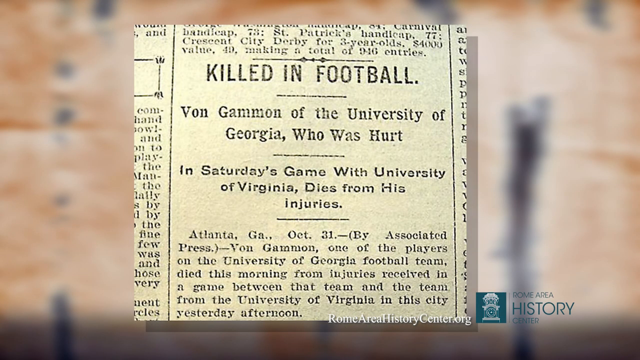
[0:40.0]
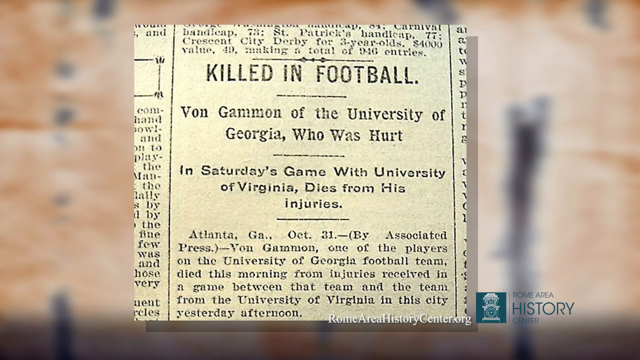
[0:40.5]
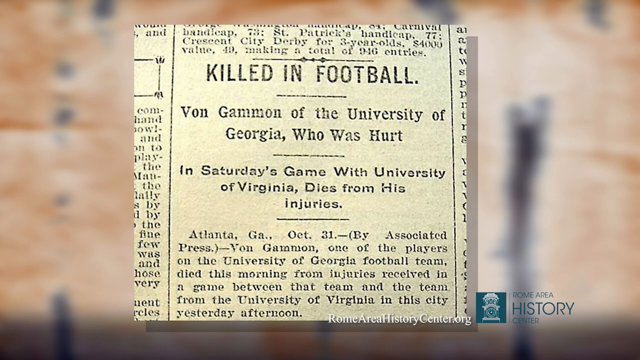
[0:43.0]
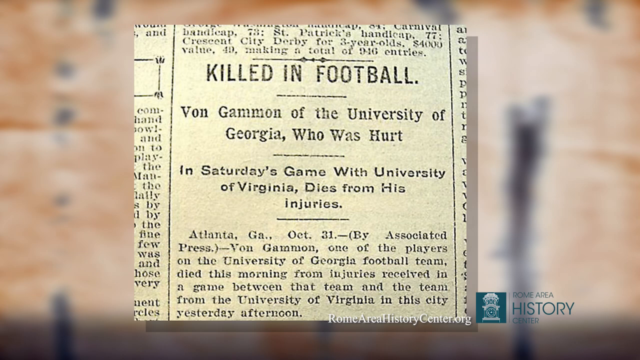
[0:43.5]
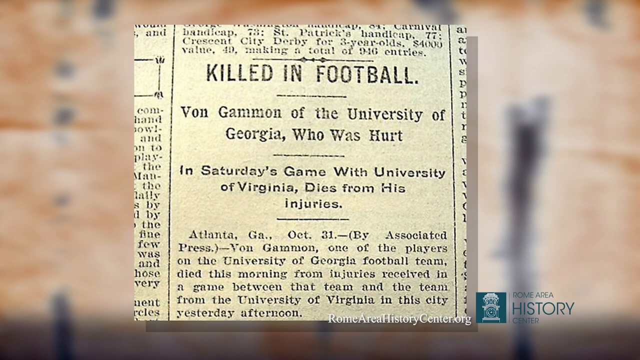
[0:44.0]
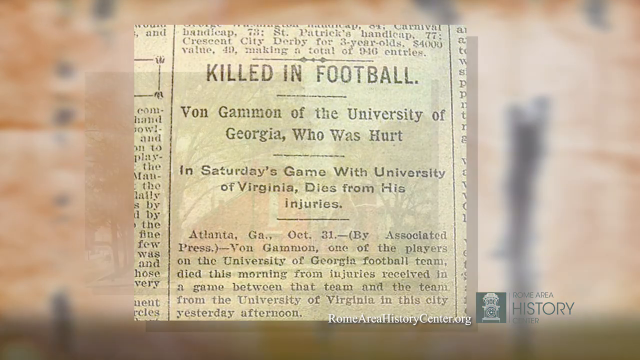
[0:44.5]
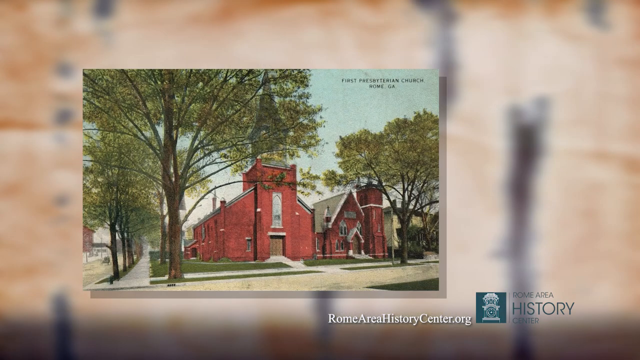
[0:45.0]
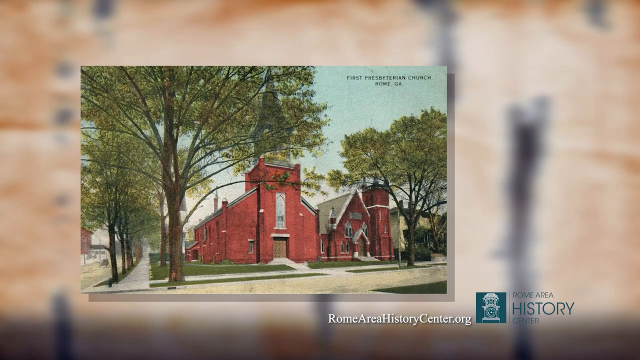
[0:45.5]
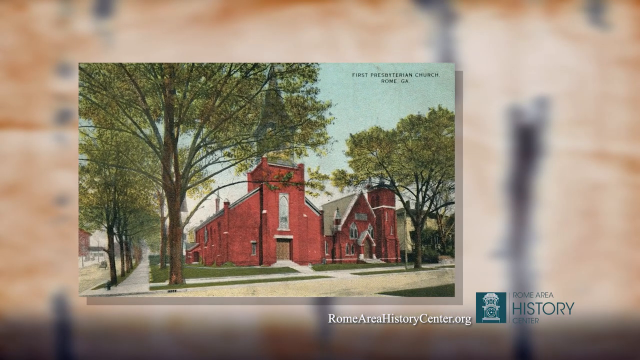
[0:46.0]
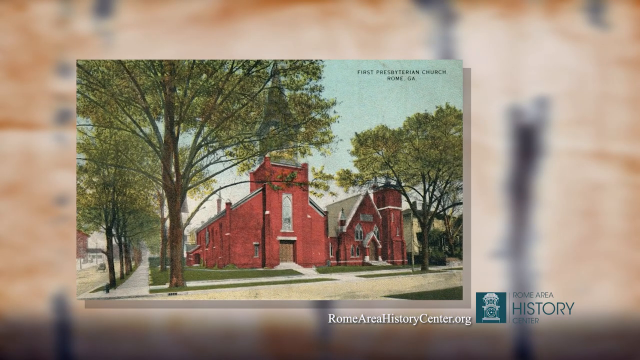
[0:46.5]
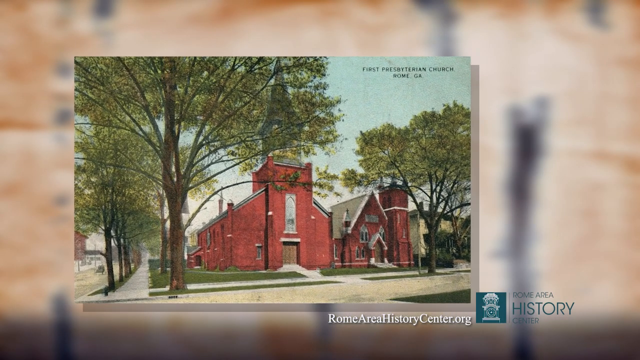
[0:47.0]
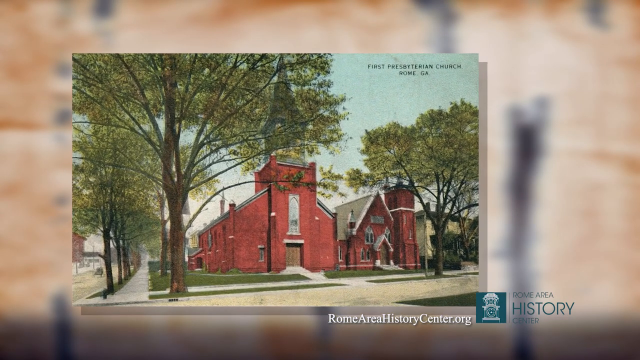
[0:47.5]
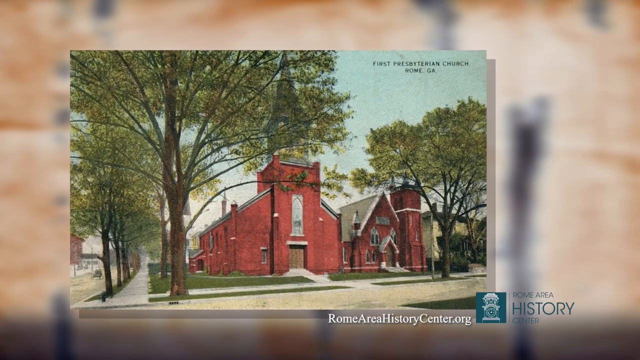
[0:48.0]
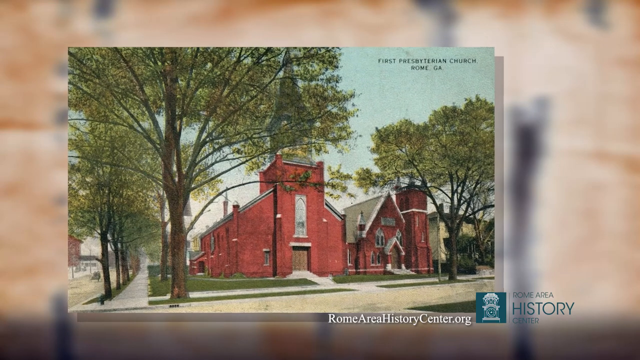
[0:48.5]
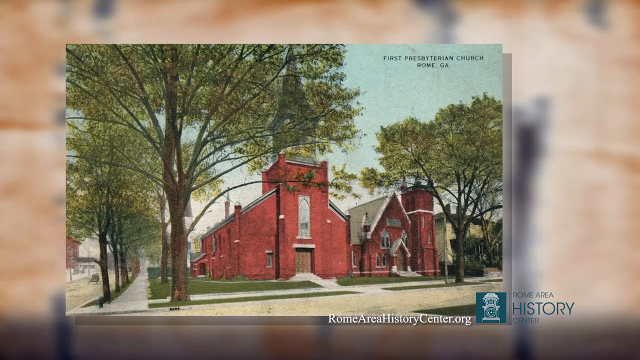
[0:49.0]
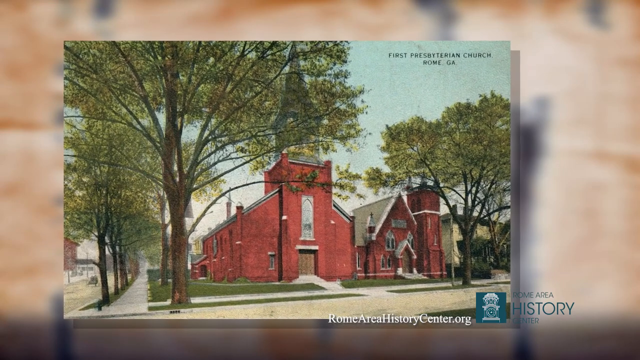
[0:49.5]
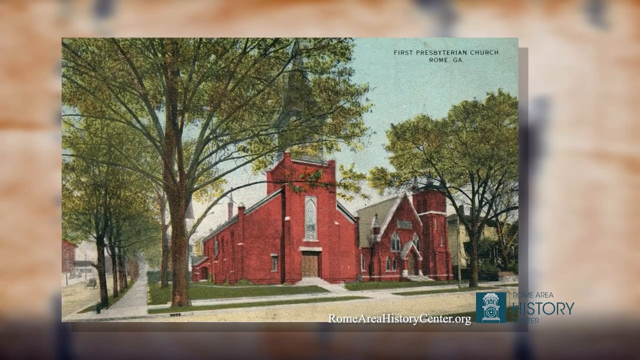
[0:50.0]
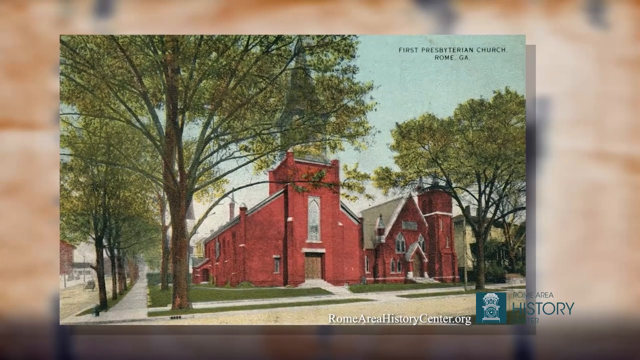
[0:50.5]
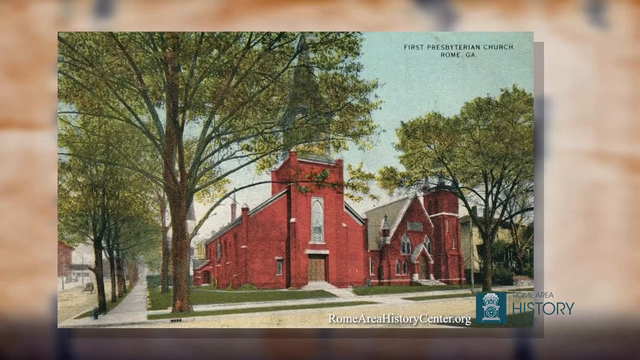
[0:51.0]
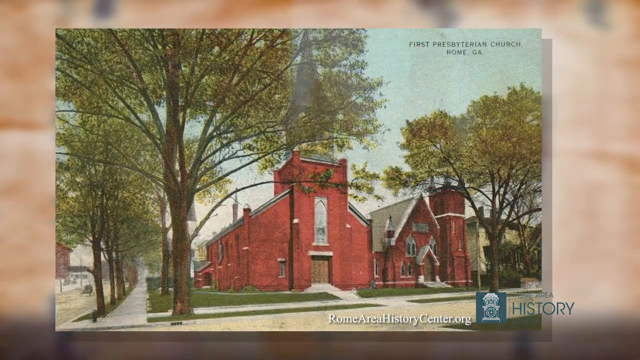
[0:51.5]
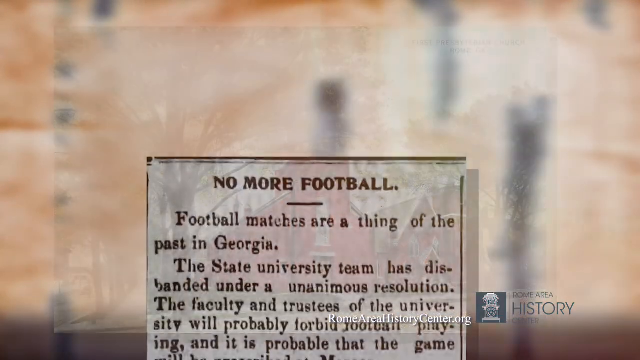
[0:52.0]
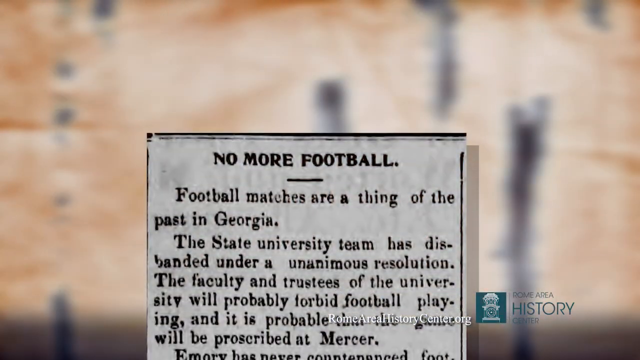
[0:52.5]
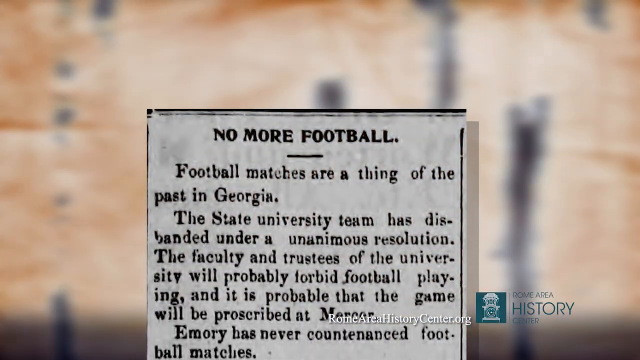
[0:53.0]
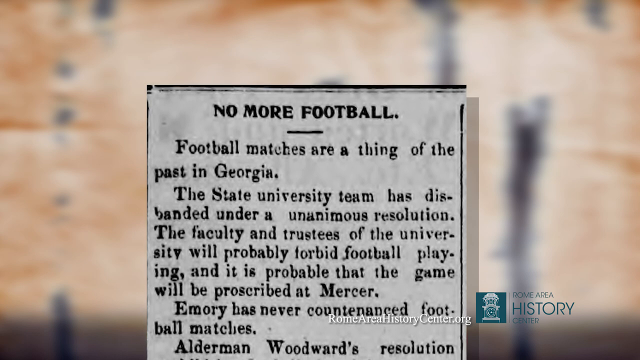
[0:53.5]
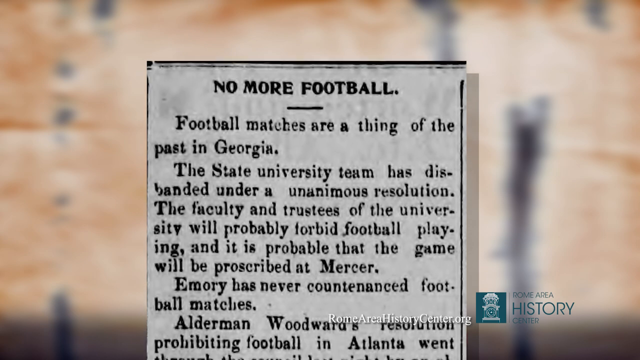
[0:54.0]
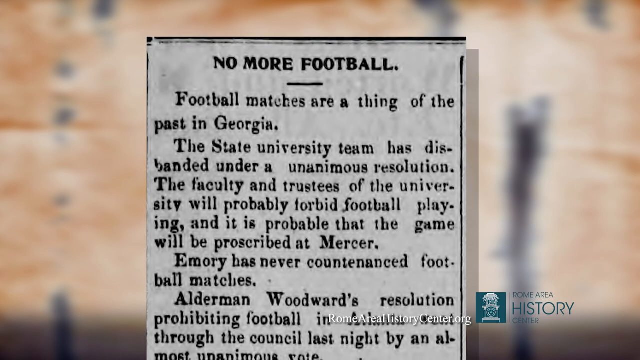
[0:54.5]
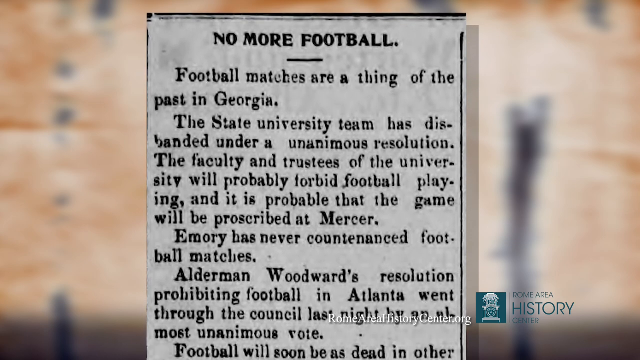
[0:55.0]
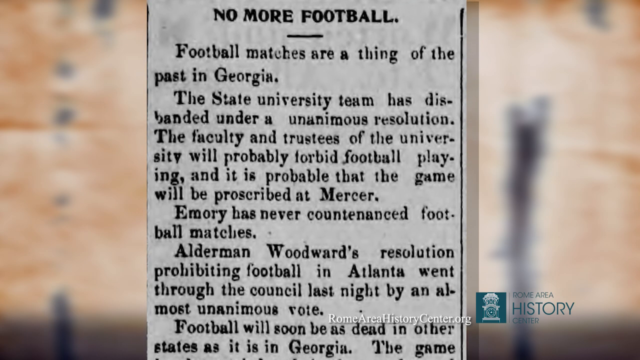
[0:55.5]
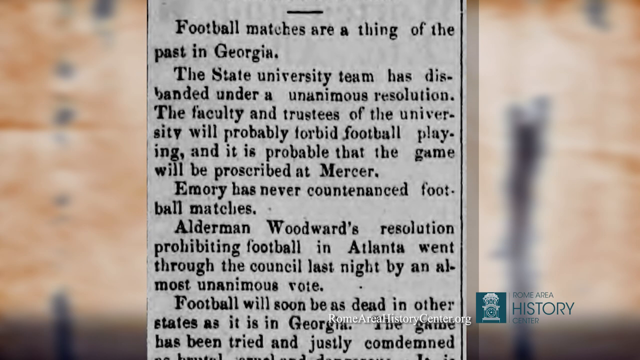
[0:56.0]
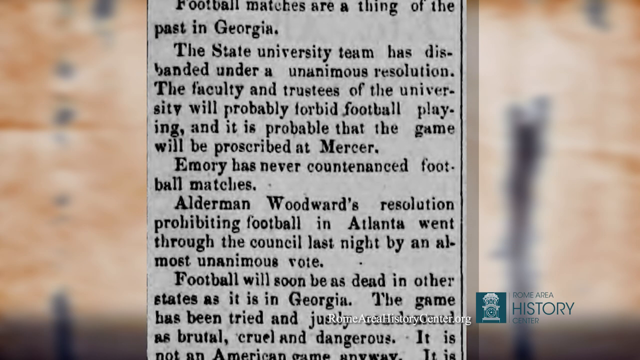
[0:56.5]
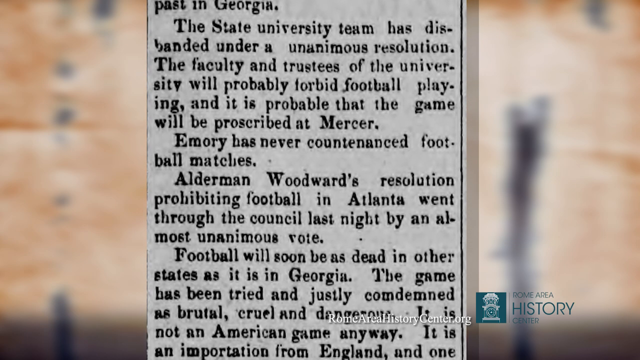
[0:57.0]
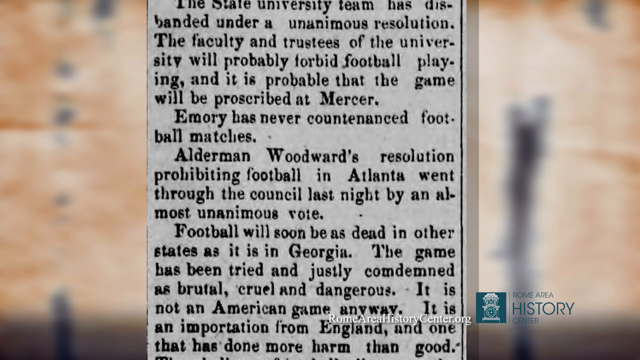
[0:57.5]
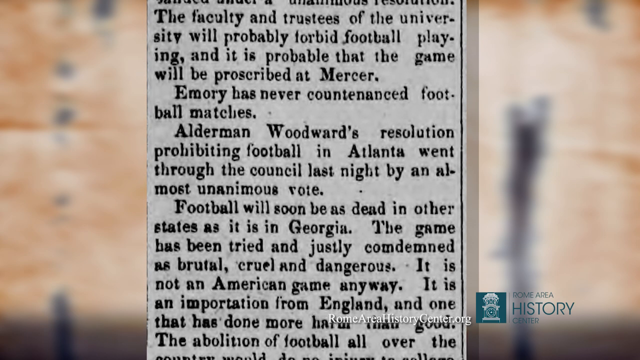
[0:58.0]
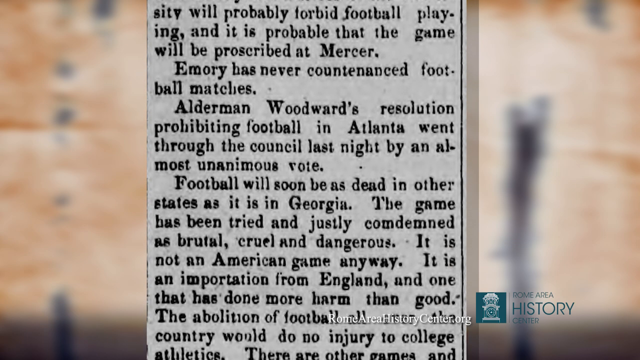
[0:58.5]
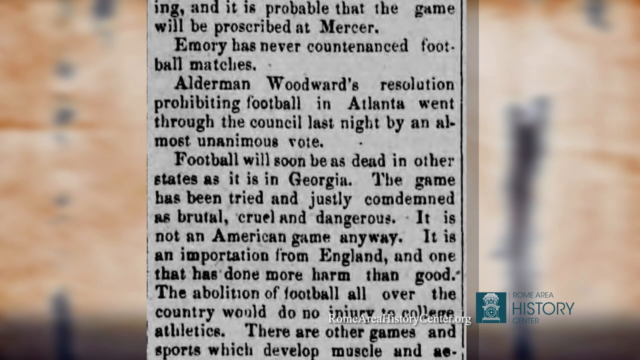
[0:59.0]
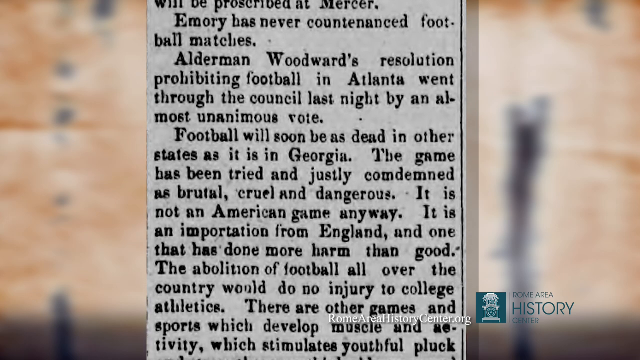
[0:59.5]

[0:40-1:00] A very old newspaper clipping is at the center of the screen. It reads "killed in football. Von Gammon of University of Georgia, who was hurt in Saturday's game with University of Virginia, dies from his injuries." The bottom section reads "Atlanta G.A. Oct 31, by Associated Press. Von Gammon, one of the players of the University of Georgia football team, died this morning from injuries received in a game between that team and the team from the University of Virginia in this city yesterday afternoon." The camera focuses on the clipping for a moment. Next comes what seems to be a picture of a red church, titled at the top "First Presbyterian Church, Rome G.A.", with trees to its left and a sidewalk going around it as the camera zooms in. Then another newspaper clipping reads "No More Football. Football matches are a thing of the past in Georgia. The state university team has disbanded under a unanimous resolution. The faculty of the university will probably forbid football playing, and it is probable that the game will be prescribed at Mercer. Emory has never countenanced football matches. Alderman Woodward's resolution prohibiting football in Atlanta went through the council last night by an almost unanimous vote. Football will soon be as dead in other states as it is in Georgia. The game has been tried and justly condemned as brutal, cruel, and dangerous. It is not an American game anyway. It is an importation from England and one that has done more harm than good. The abolition of football all over the country would do no injury to college athletics."